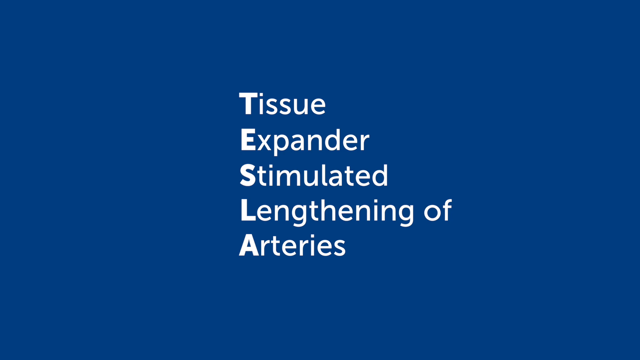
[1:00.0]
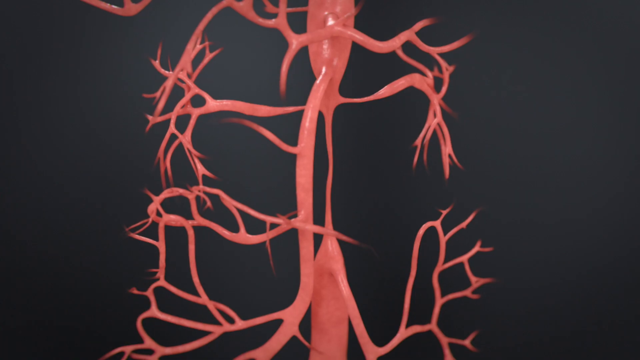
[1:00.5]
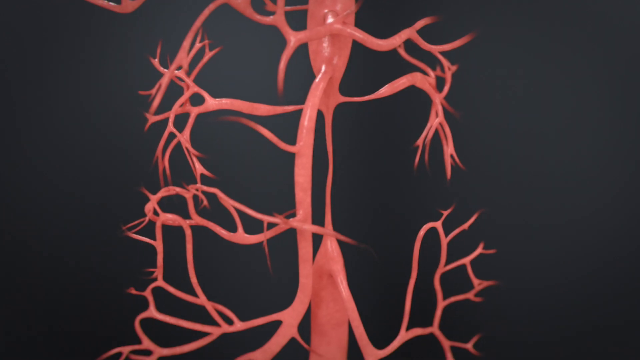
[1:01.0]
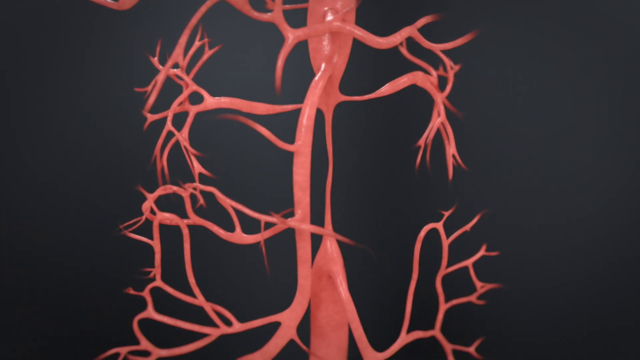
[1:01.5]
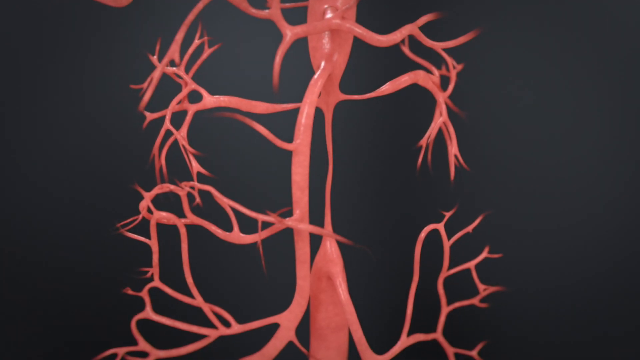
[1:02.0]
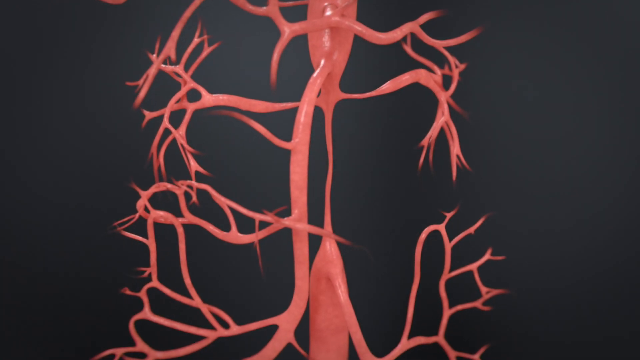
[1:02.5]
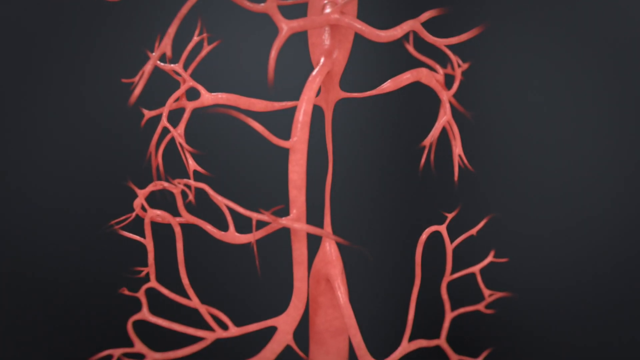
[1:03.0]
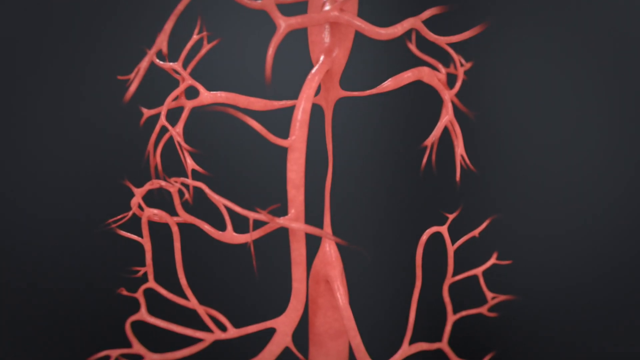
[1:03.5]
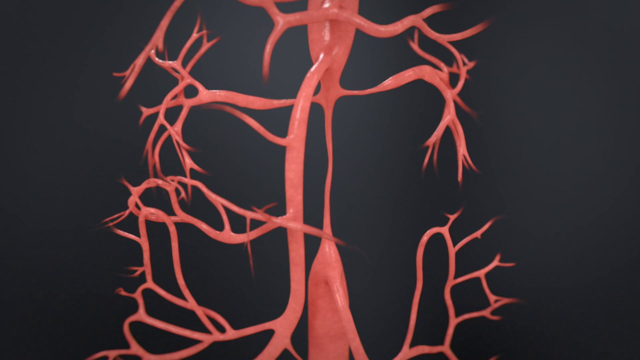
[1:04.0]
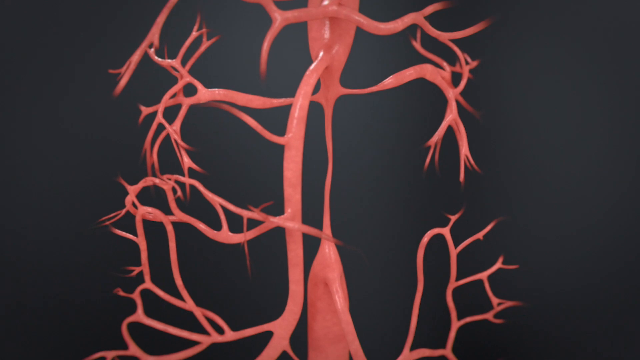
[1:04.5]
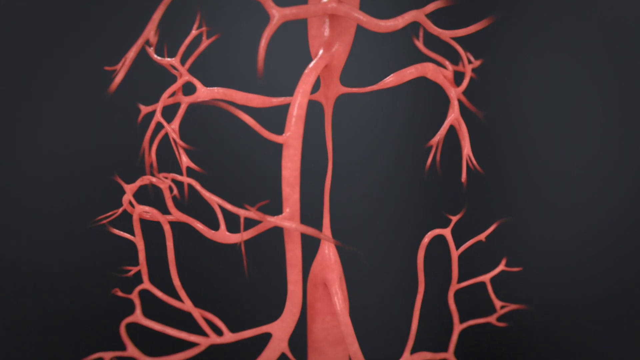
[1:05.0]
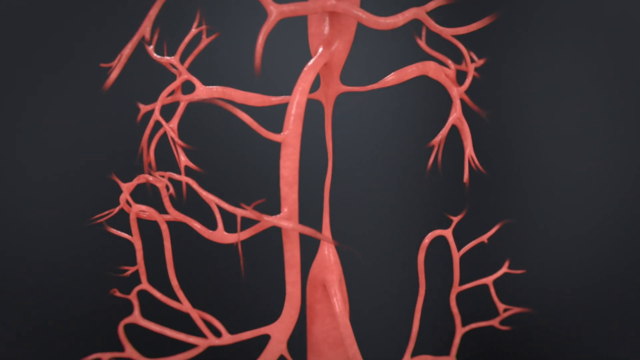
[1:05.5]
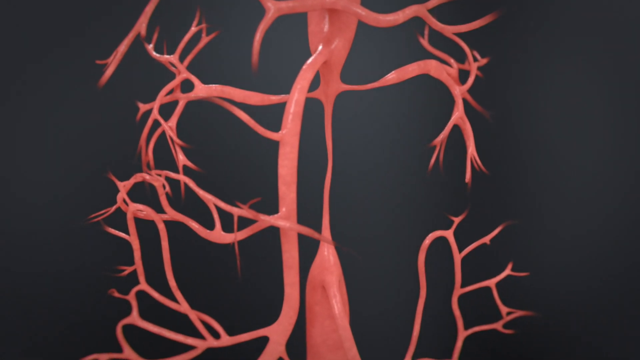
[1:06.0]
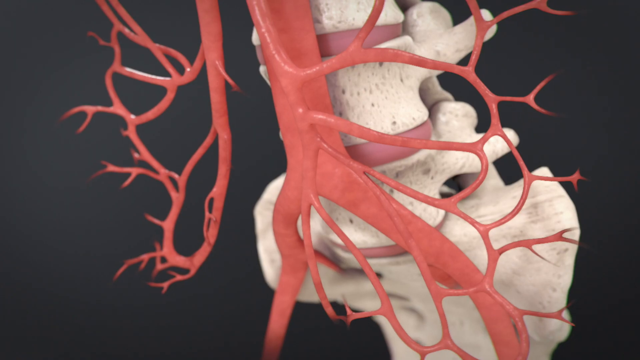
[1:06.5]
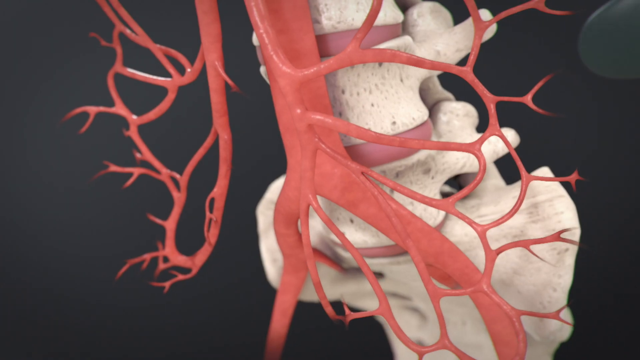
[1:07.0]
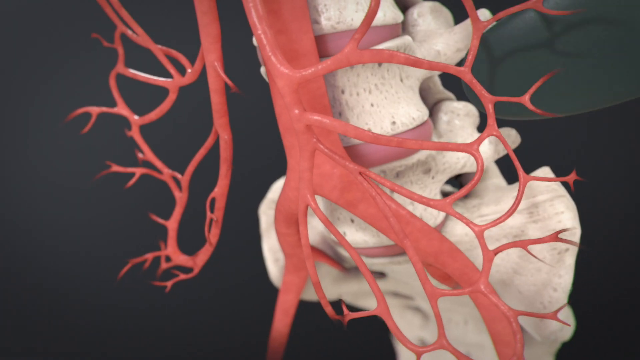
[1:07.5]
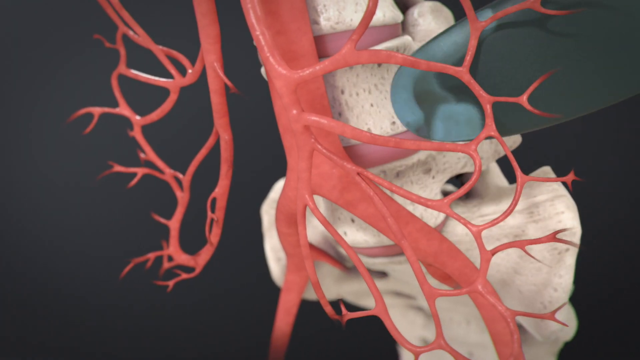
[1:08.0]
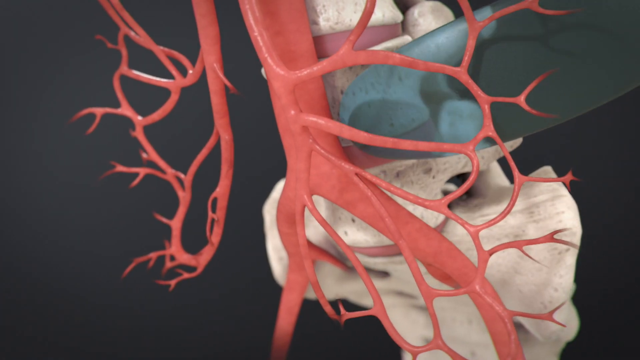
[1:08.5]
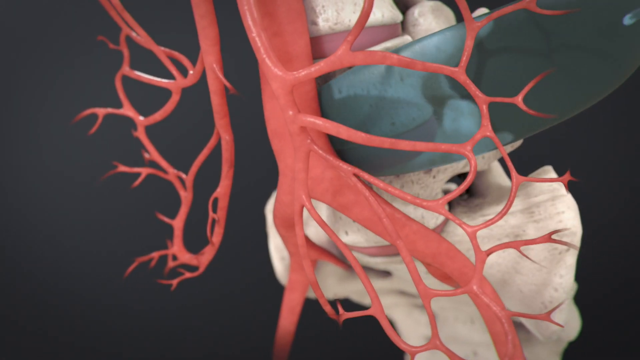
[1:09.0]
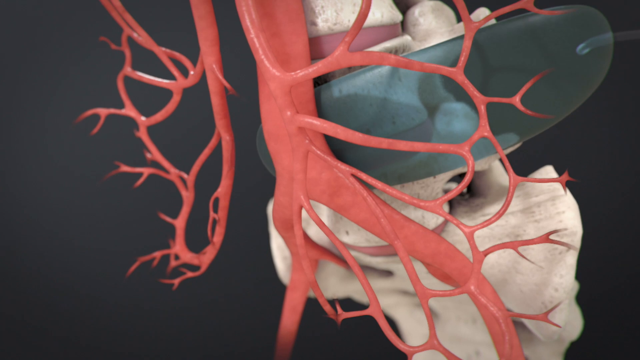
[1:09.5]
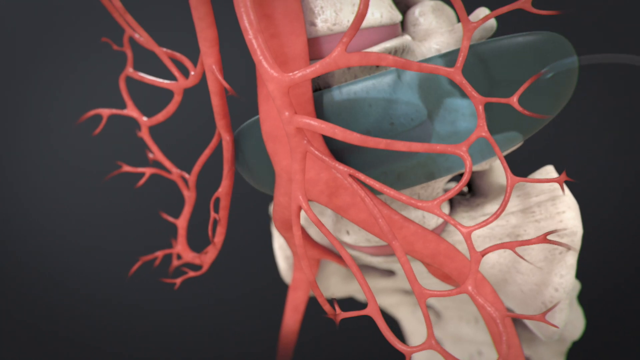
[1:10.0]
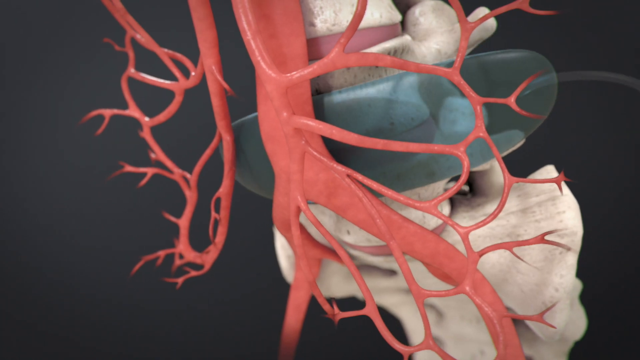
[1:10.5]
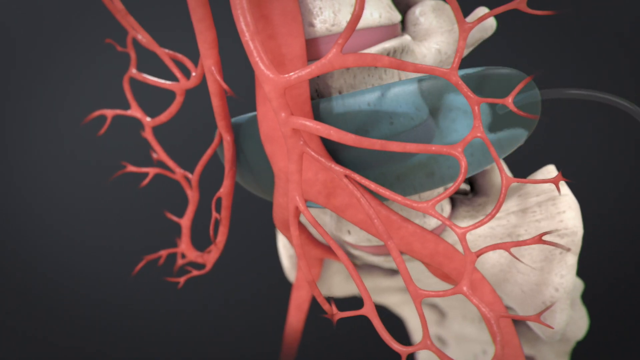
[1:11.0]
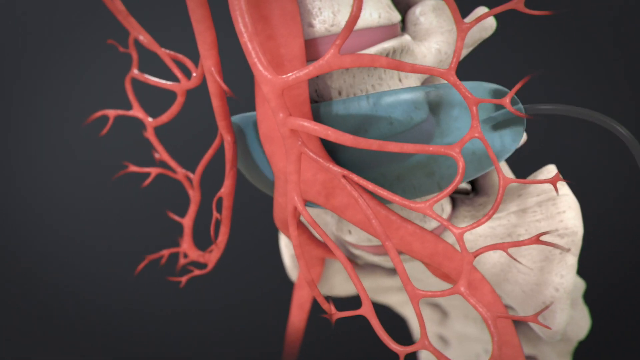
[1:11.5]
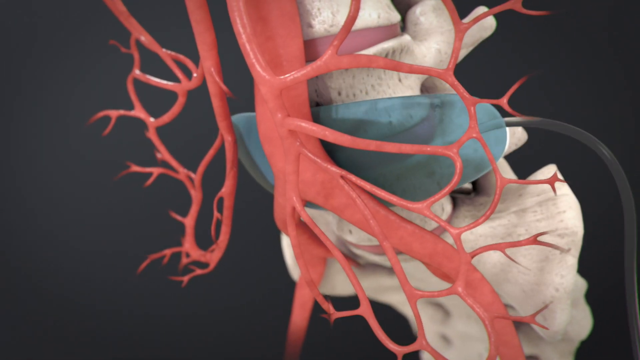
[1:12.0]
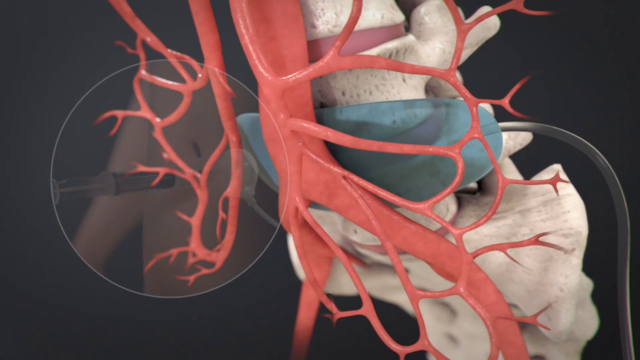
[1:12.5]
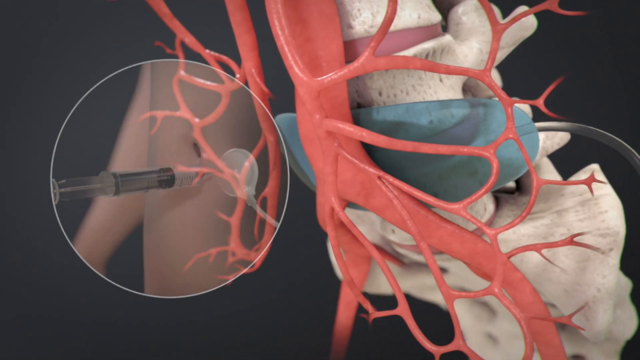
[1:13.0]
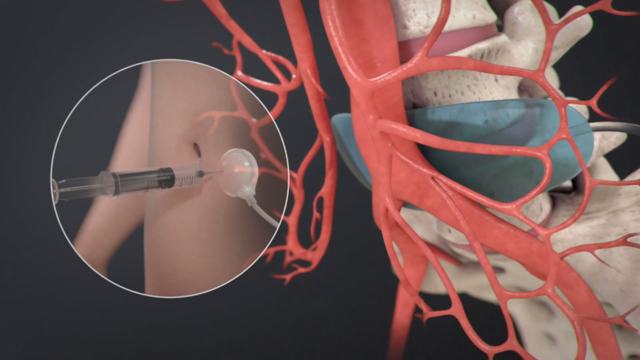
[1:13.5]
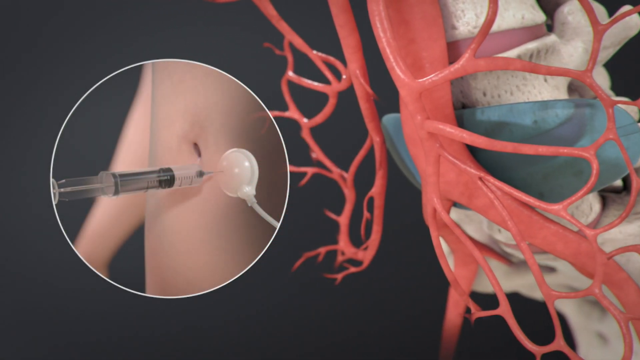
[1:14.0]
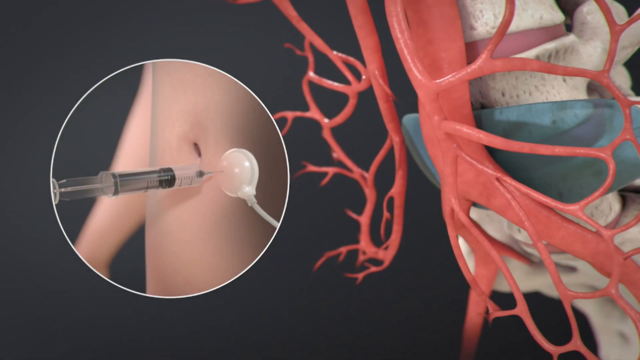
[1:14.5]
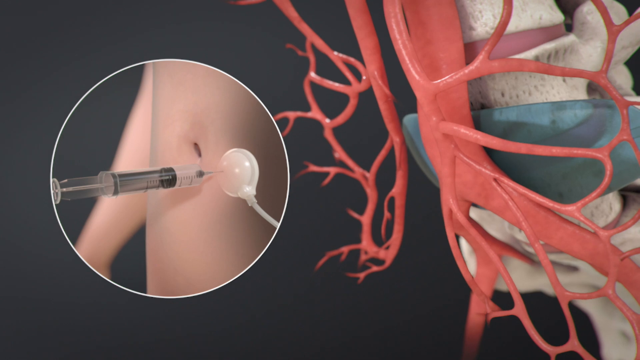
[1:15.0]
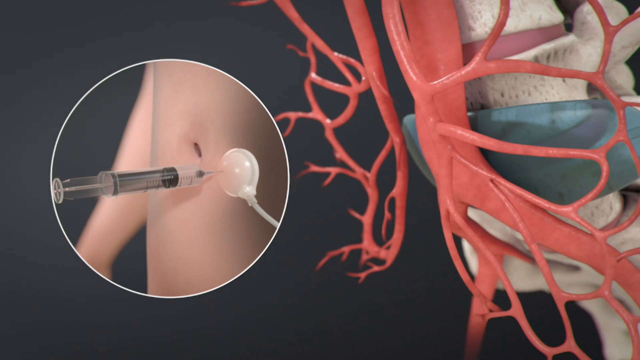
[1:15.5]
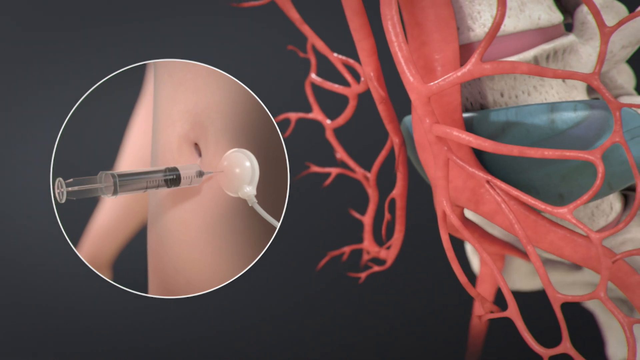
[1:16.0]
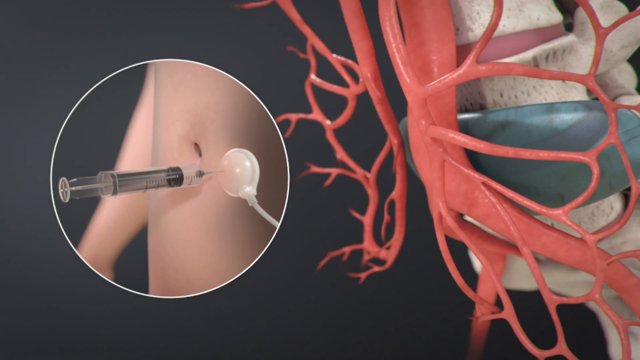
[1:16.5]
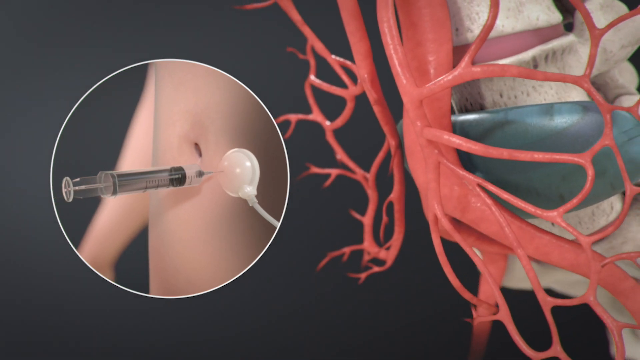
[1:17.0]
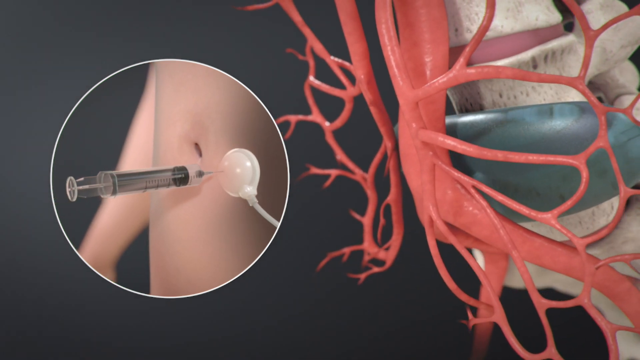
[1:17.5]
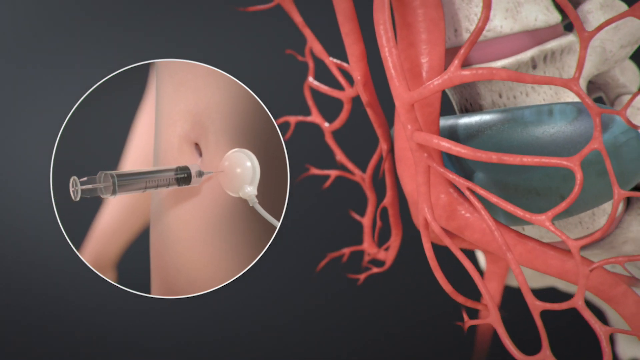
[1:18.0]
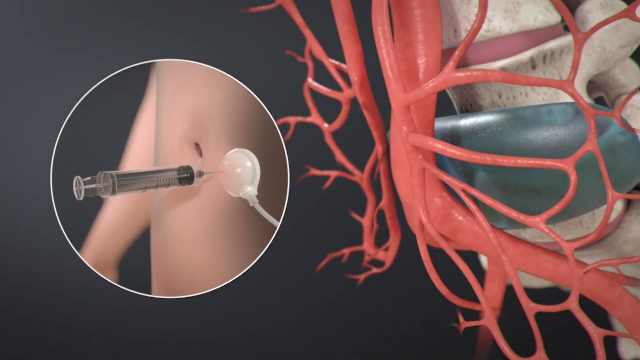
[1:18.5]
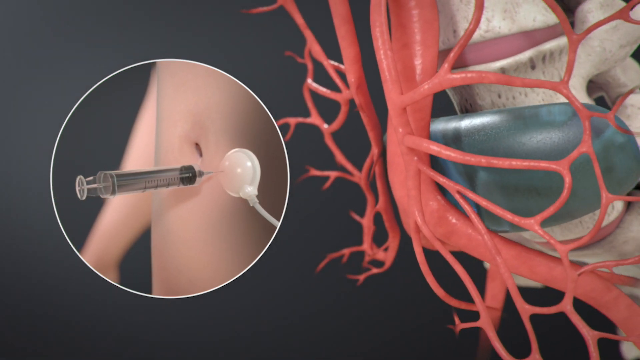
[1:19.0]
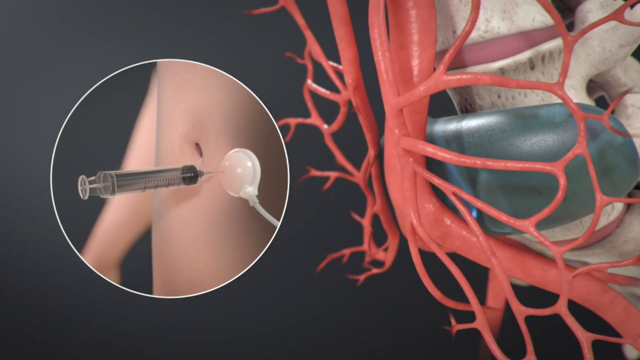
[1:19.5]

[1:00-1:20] On a blue background, the word "TESLA" is arranged vertically in the center of the screen in bold white font. Other words appear from each letter: "TISSUE", then "EXPANDER", then "SIMULATED", then "LENGTHENING OF", and from the A, "ARTERIES". The scene changes to the rotating valve or aortic system, and then to another diagram showing the spine with the vein or nerve system attached to it. A long, oval, semi-transparent blue device comes in from the right side of the screen and is slipped between the spine and the nerve system, with the entire diagram on the right side of the screen. A circle with a white outline pops up on the left. Inside it, an animated human body is shown with an injection going into a white circular plastic piece situated underneath the belly button; the skin is transparent, so the device is visible inside the stomach to the right of the belly button.